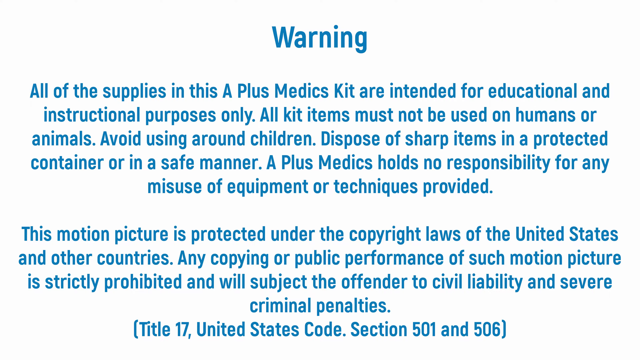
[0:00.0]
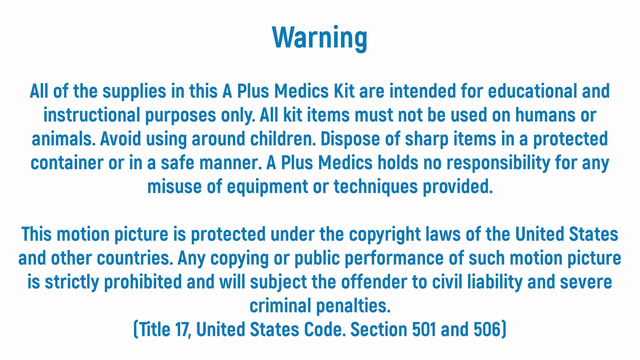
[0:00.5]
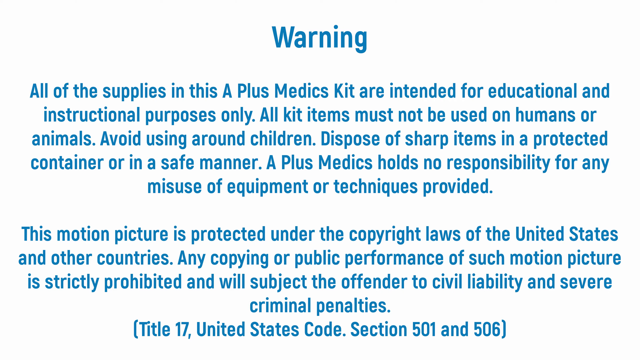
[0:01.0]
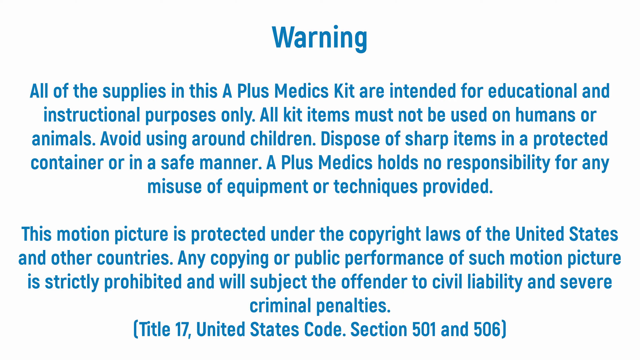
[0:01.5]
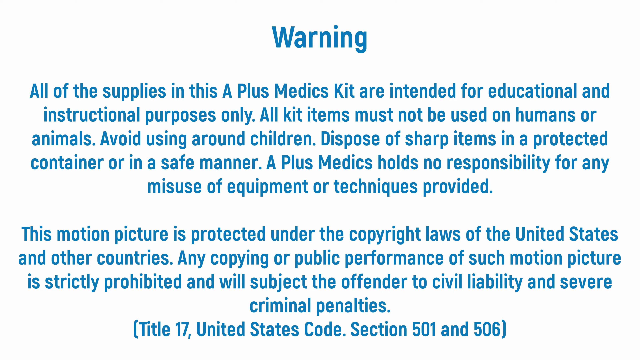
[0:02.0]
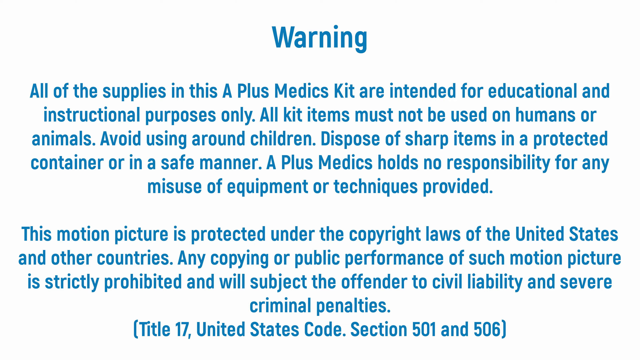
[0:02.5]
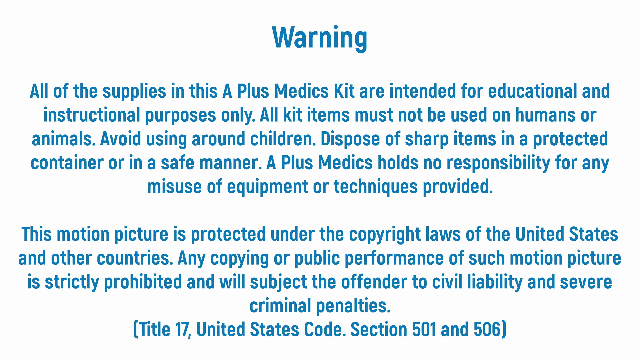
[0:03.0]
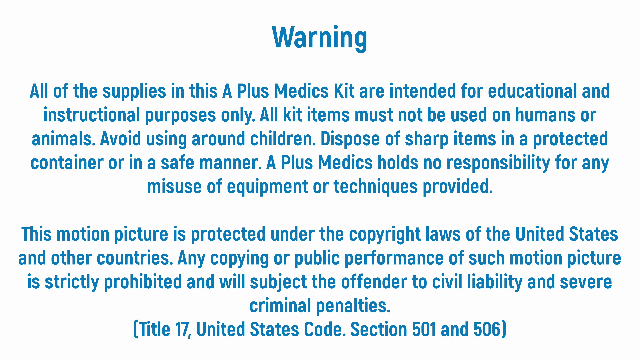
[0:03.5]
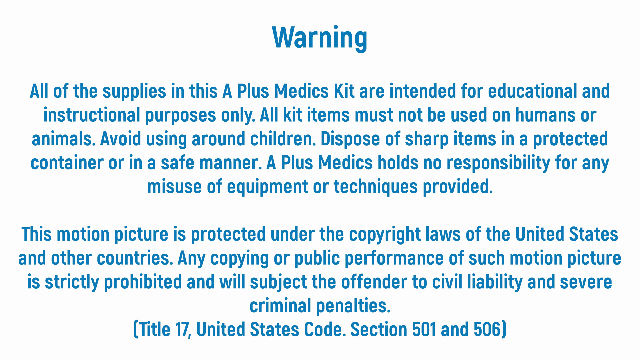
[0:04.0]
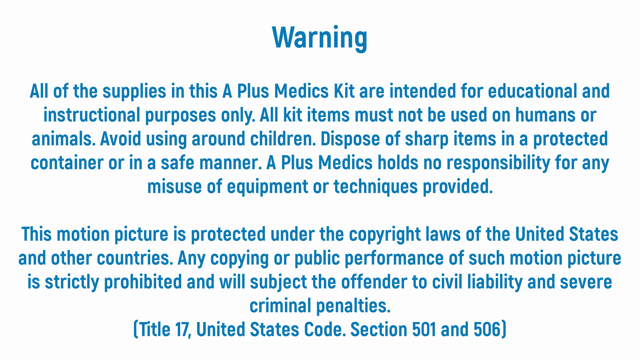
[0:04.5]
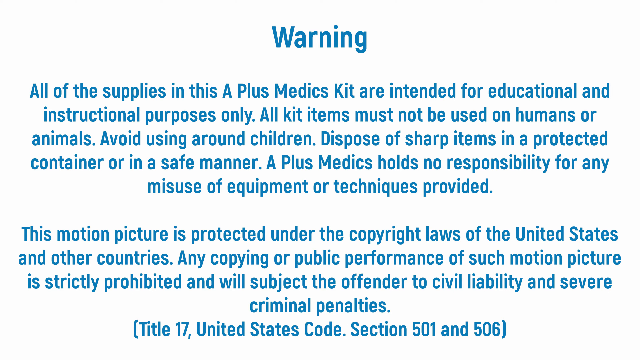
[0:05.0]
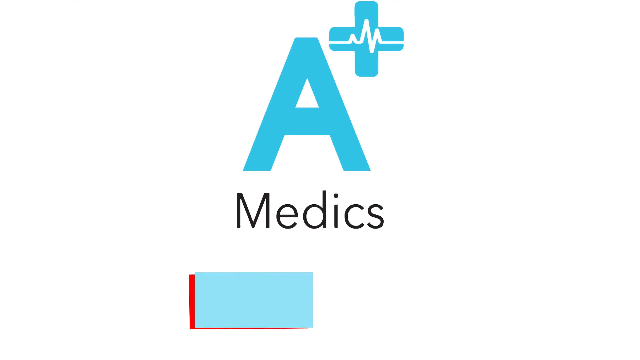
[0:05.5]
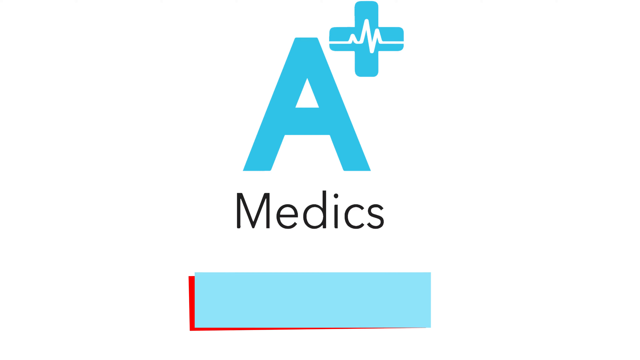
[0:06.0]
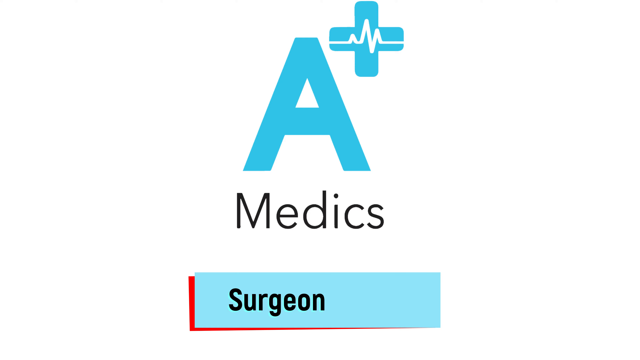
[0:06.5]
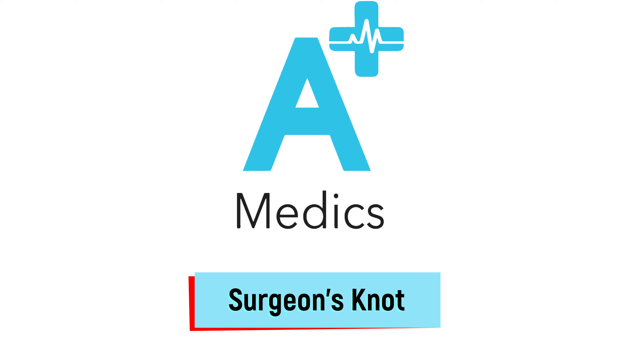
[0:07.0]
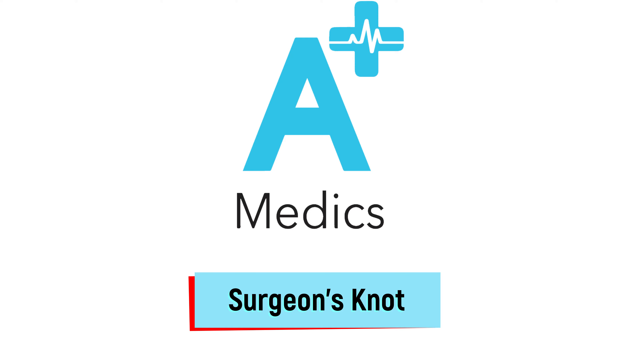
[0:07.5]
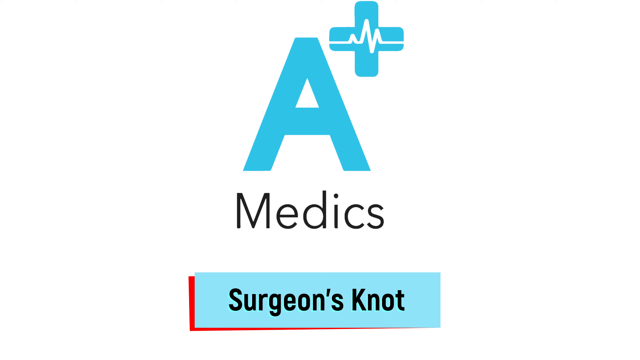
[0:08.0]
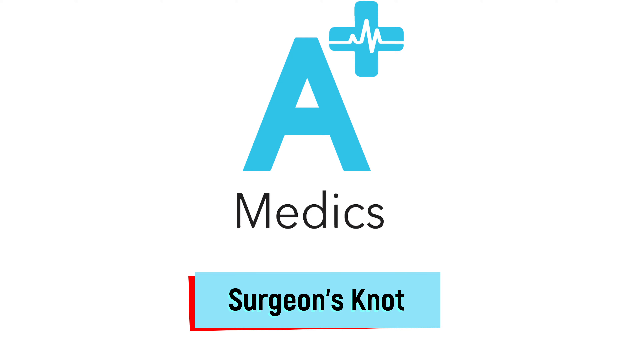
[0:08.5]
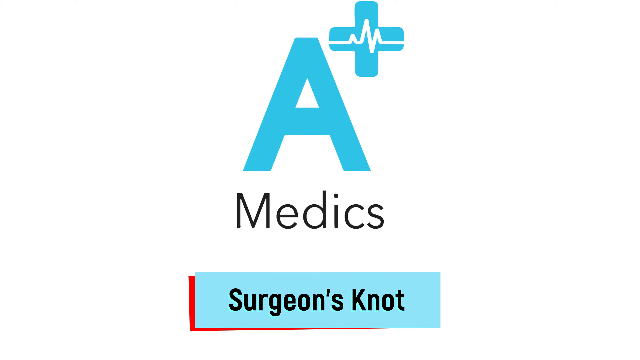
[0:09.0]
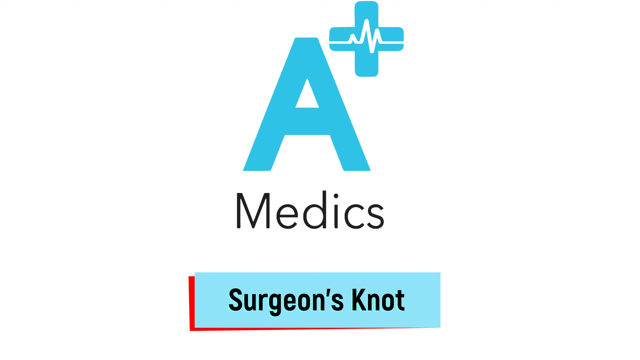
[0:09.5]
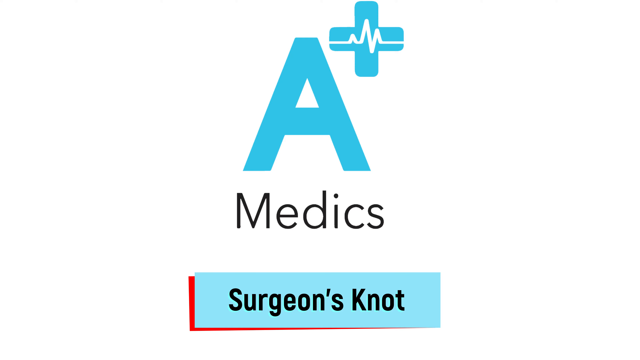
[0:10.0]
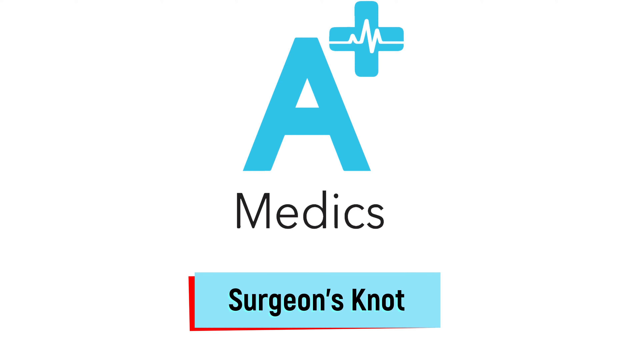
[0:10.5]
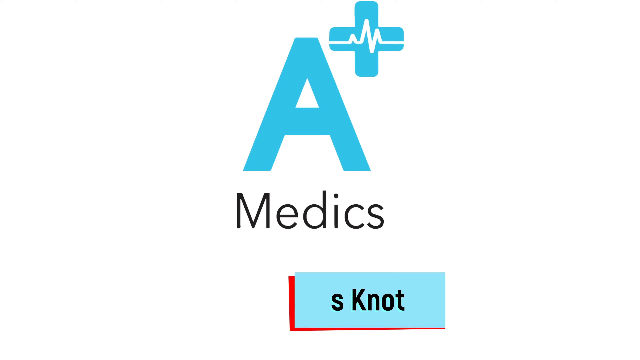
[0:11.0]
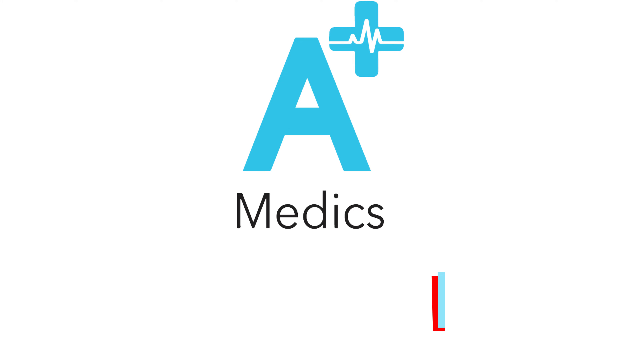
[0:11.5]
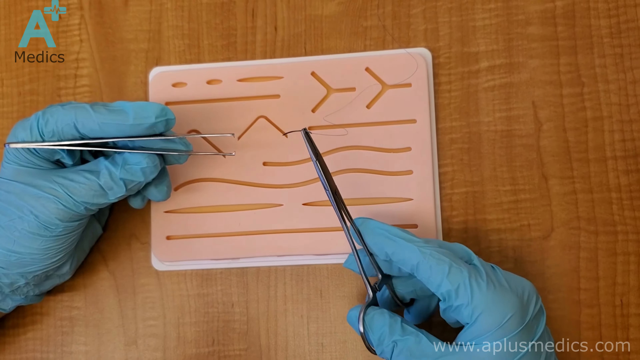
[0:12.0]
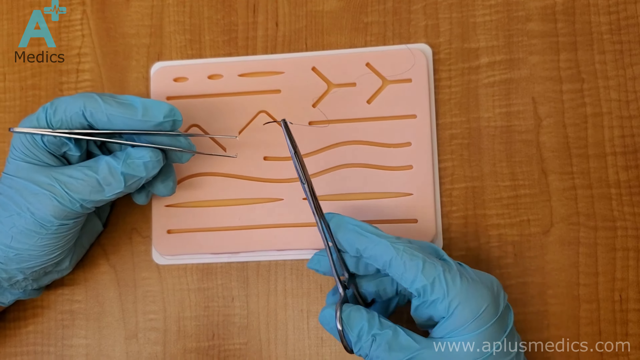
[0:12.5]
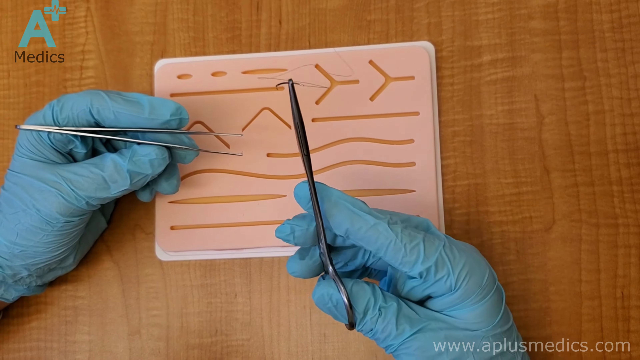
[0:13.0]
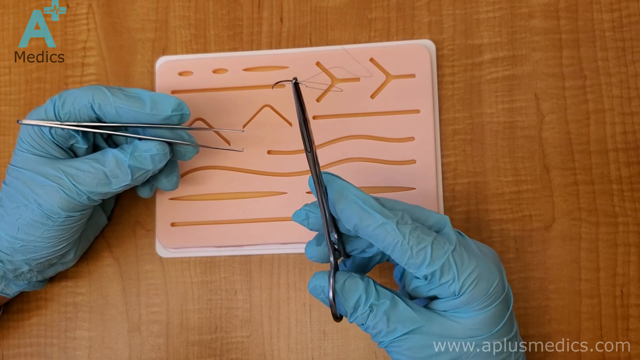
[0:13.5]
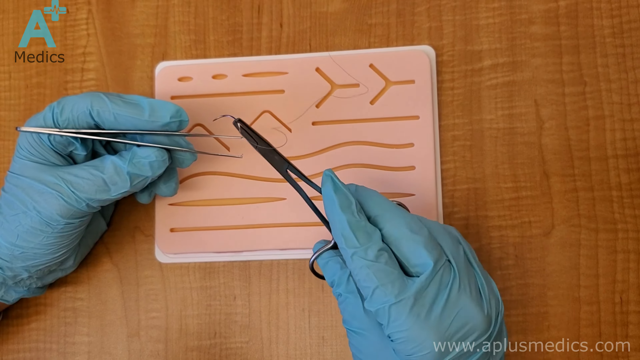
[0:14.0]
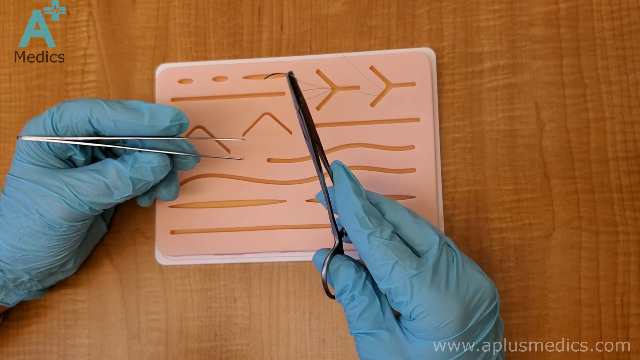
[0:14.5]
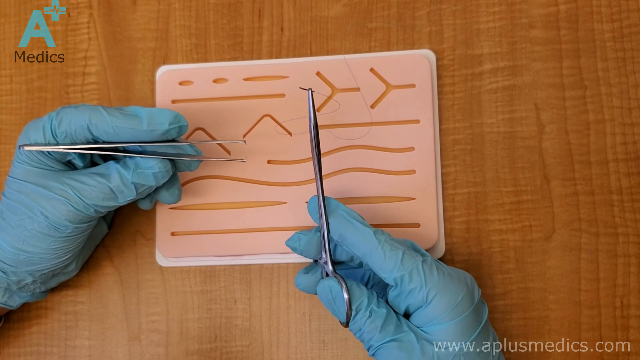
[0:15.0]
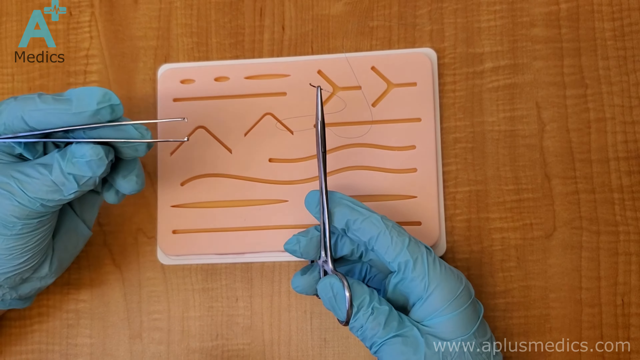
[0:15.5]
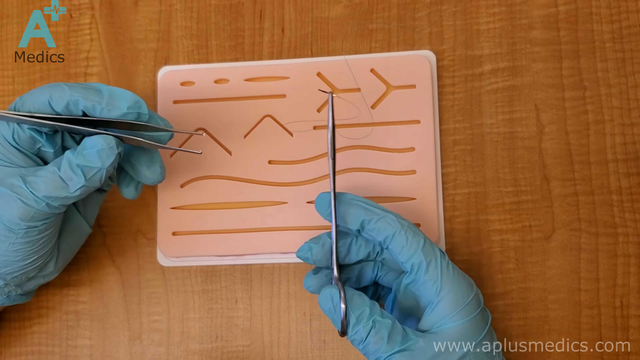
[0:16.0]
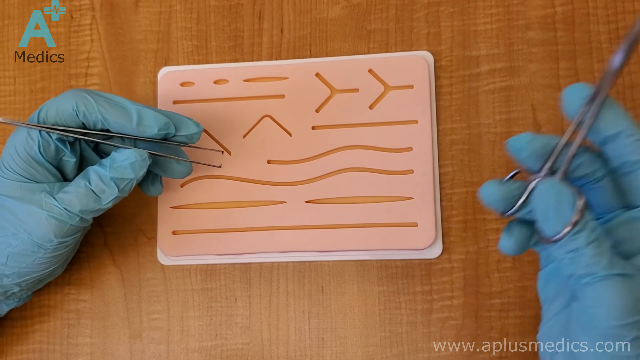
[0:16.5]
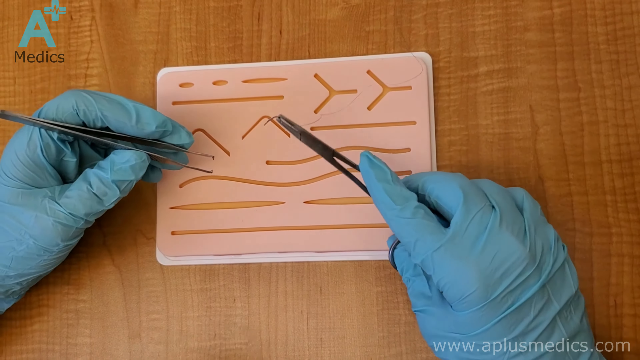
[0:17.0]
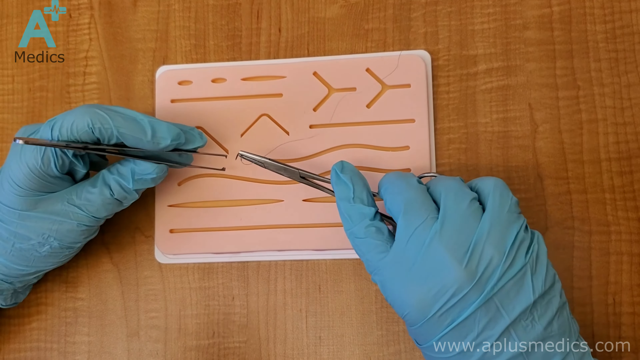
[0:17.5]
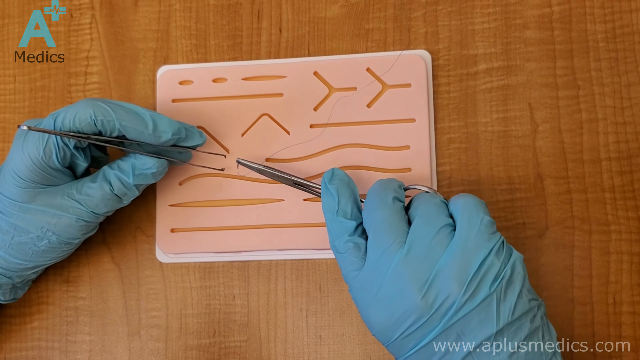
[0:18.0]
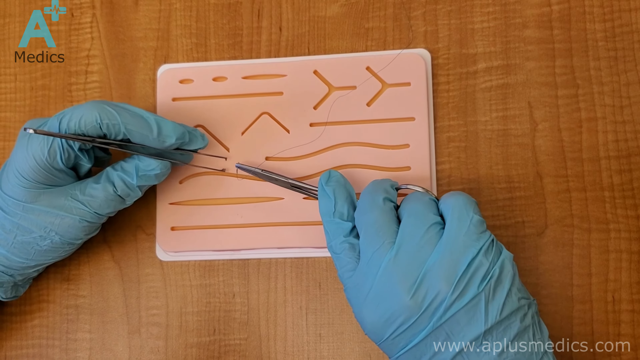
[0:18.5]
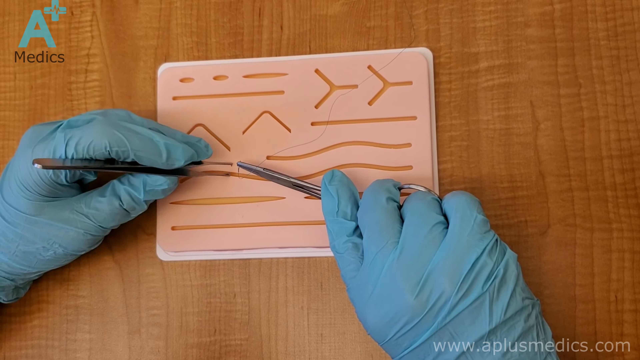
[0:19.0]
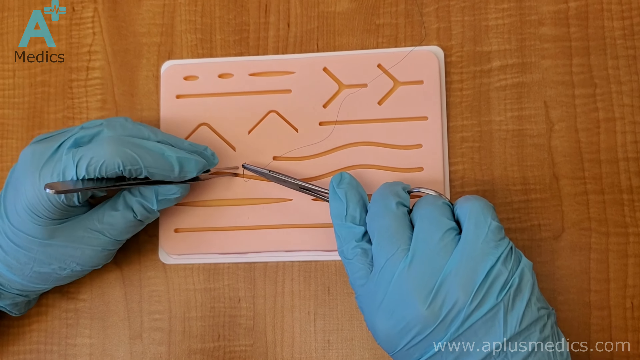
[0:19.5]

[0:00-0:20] The video opens with a heading that says "Warning" and a large warning underneath it that reads: "All the supplies in this A Plus Medics Kit are intended for educational and instructional purposes only. All kit items must not be used on humans or animals. Avoid using around children. Dispose of sharp items in a protected container or in a safe manner. A Plus Medics holds no responsibility for any misuse of equipment or techniques provided. This motion picture is protected under the copyright laws of the United States and other countries. Any copying or public performance of such motion picture is strictly prohibited and will subject the offender to civil liability and severe criminal penalties." The text is in turquoise font against a white background. The next screen shows a large, bold capital "A" in the same turquoise font, with a little plus sign to the right of it, and "Medics" written underneath. The plus sign has a little white line through it that looks like the line from a heart-monitoring machine. Underneath, "Surgeon's Knot" appears and then disappears. Next, a pair of hands in blue rubber gloves appears, each hand holding a metal tool, working over a little rectangular box.